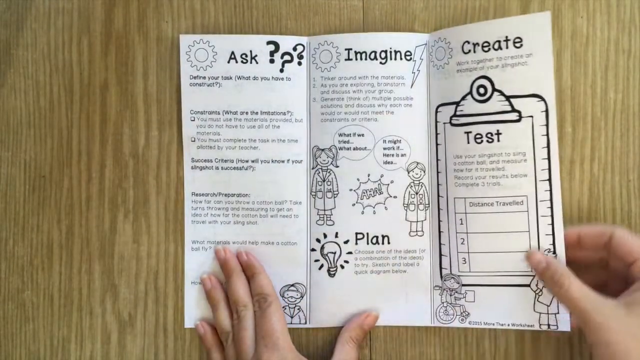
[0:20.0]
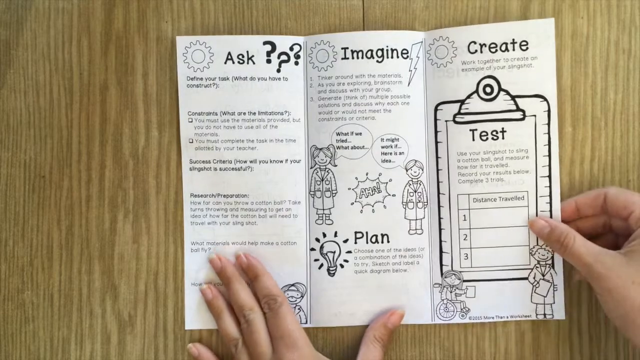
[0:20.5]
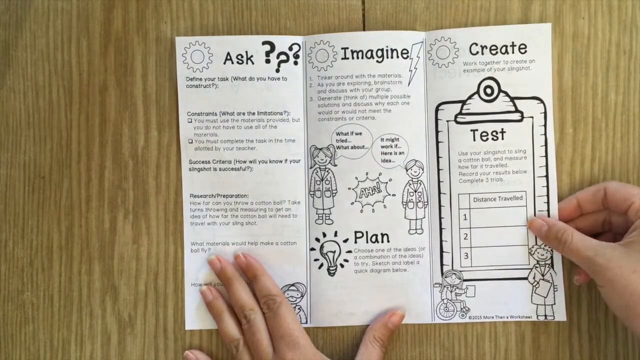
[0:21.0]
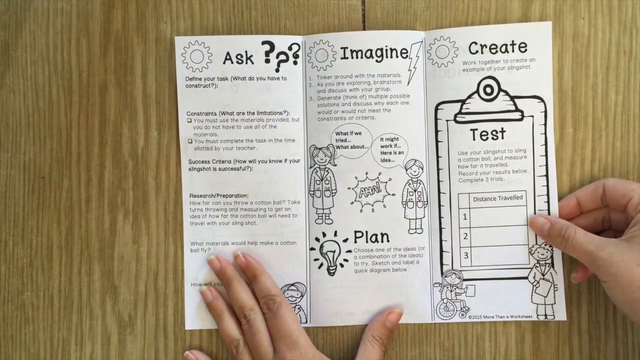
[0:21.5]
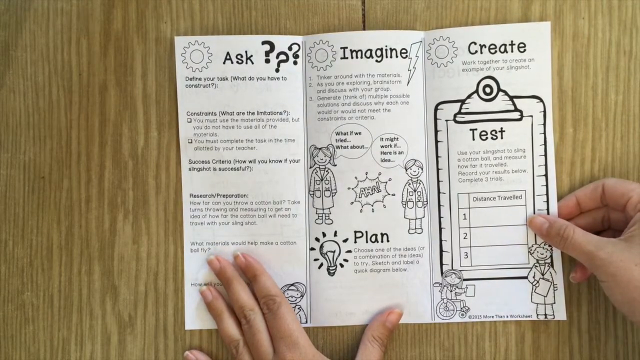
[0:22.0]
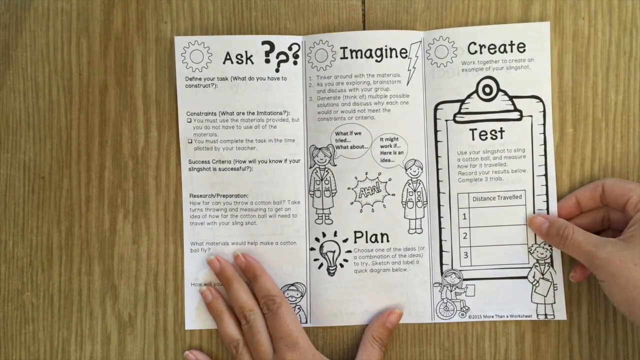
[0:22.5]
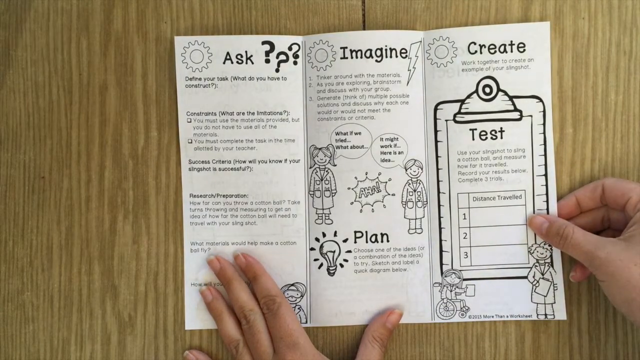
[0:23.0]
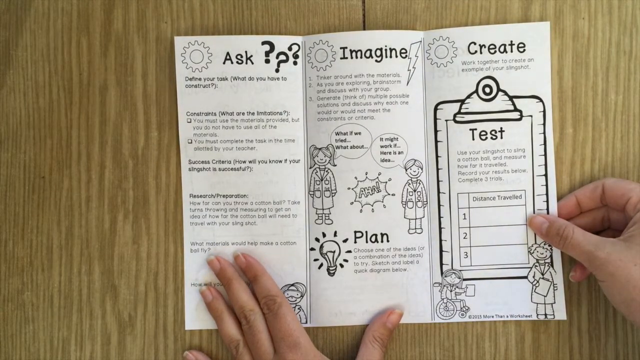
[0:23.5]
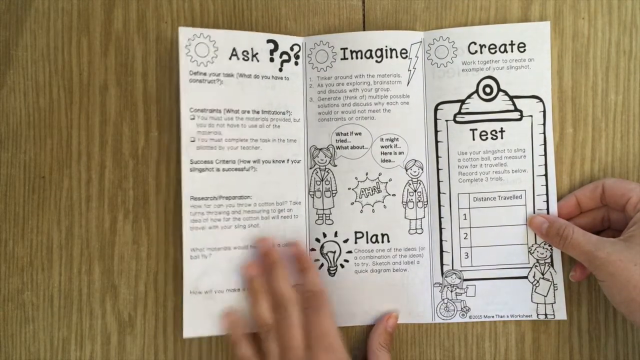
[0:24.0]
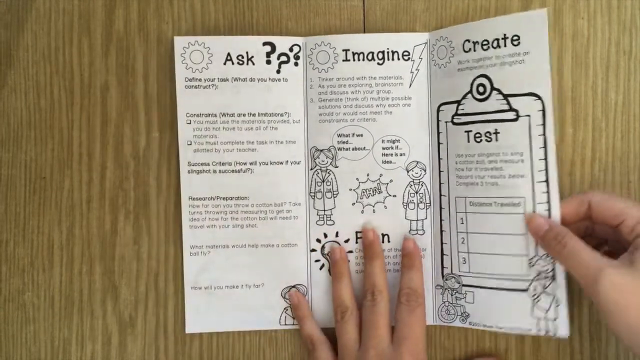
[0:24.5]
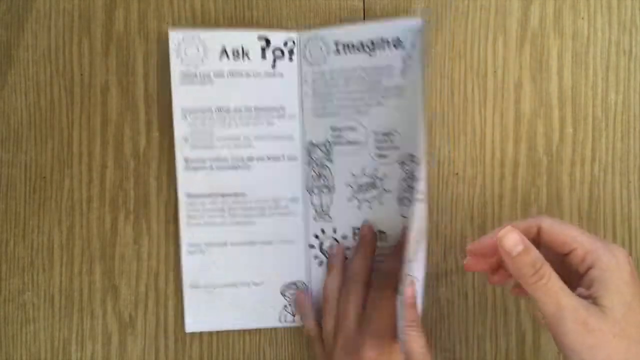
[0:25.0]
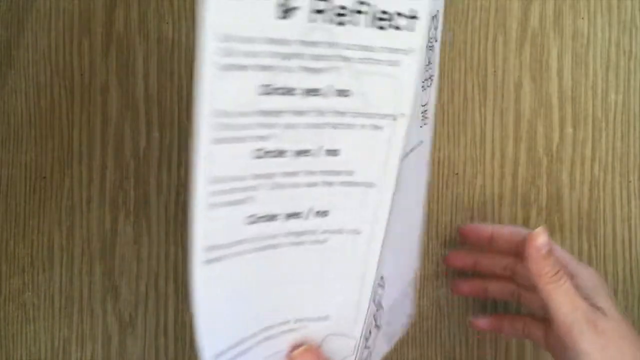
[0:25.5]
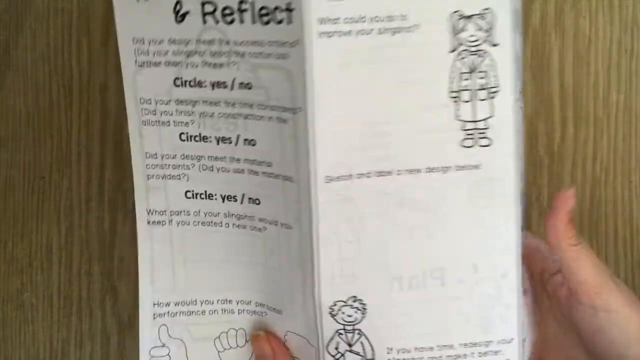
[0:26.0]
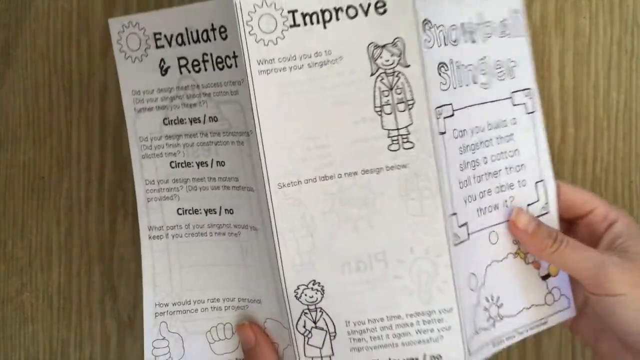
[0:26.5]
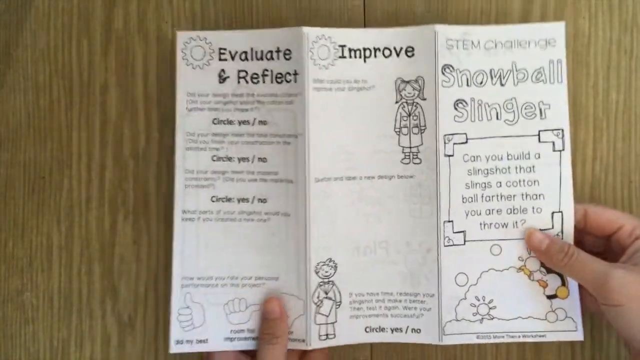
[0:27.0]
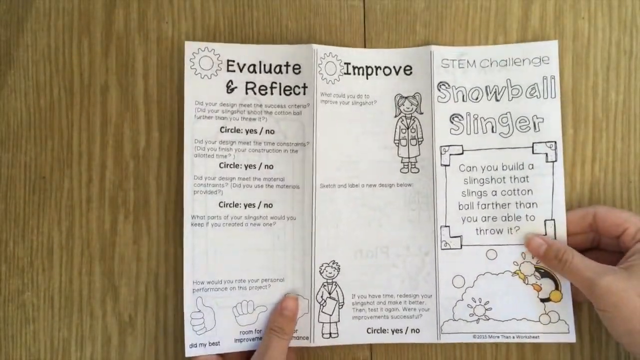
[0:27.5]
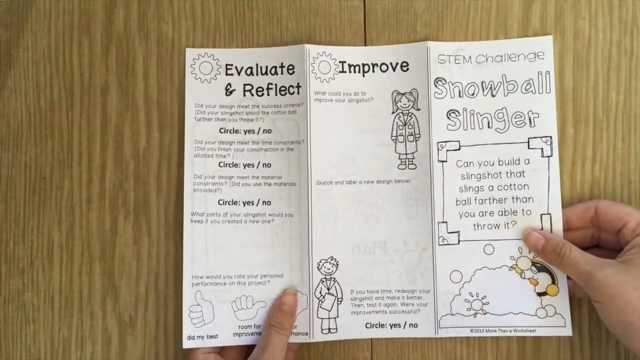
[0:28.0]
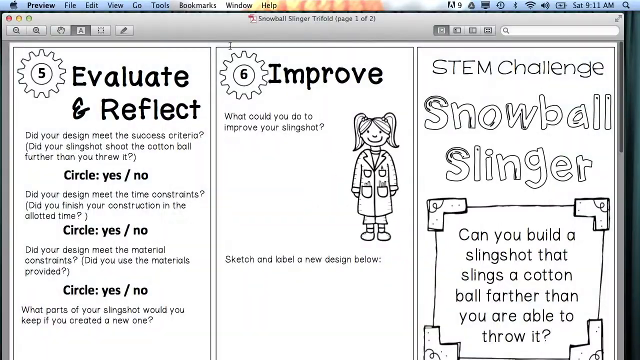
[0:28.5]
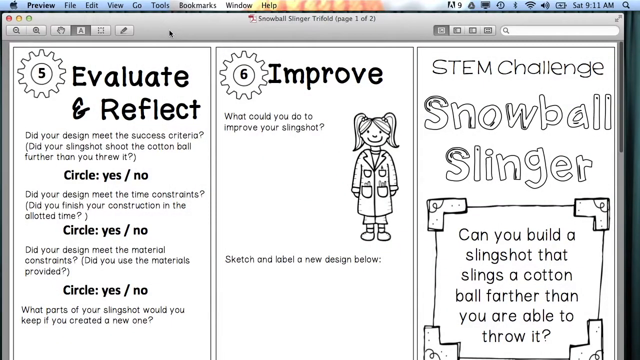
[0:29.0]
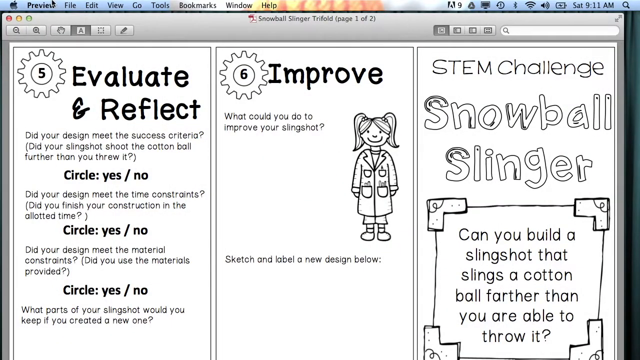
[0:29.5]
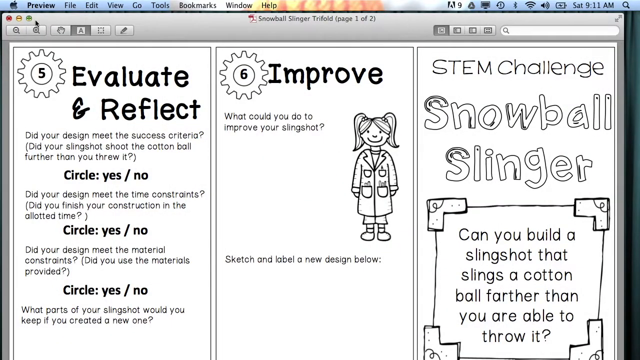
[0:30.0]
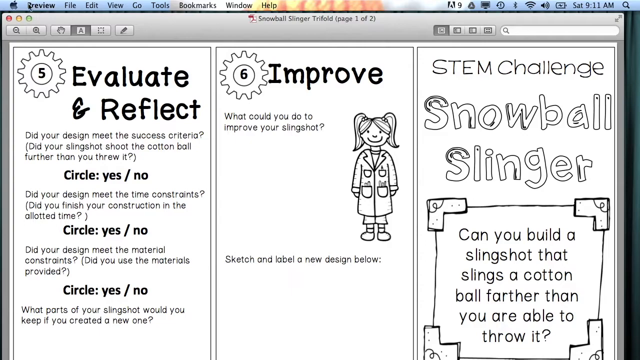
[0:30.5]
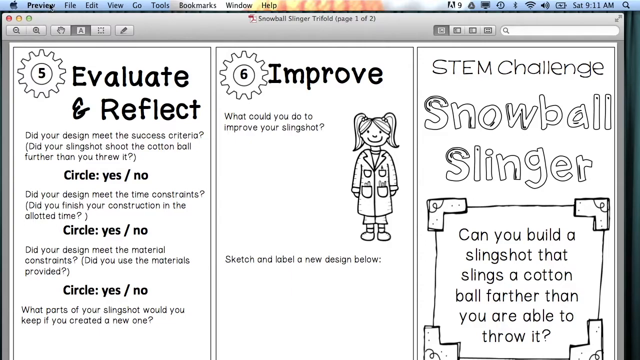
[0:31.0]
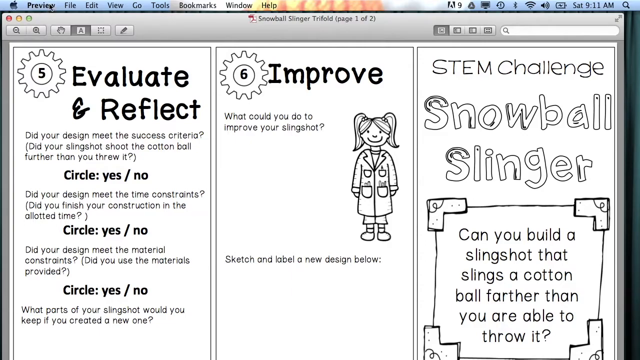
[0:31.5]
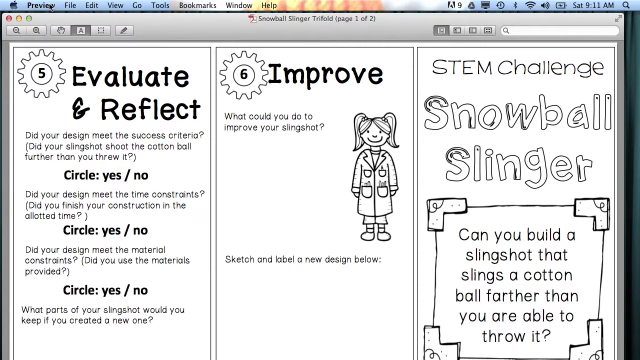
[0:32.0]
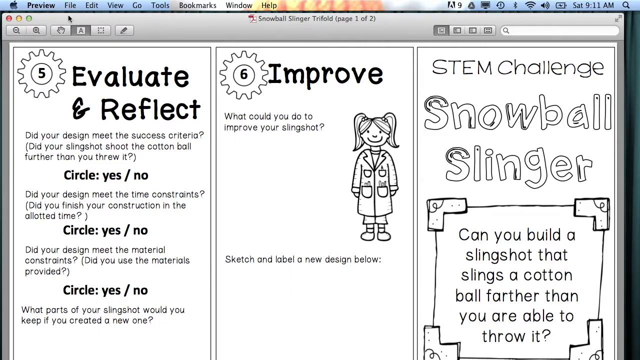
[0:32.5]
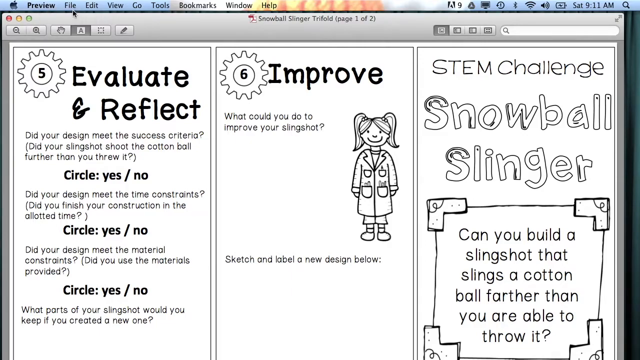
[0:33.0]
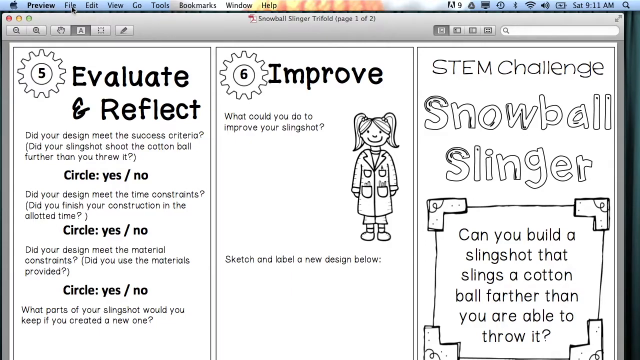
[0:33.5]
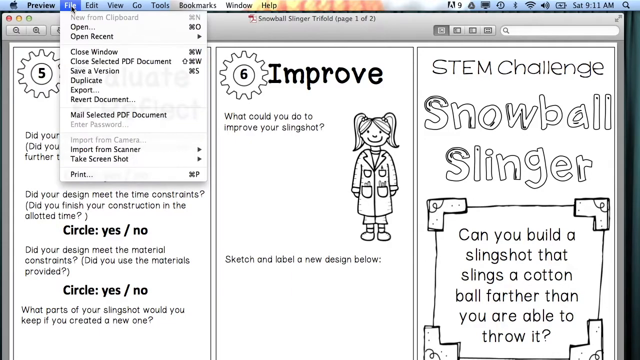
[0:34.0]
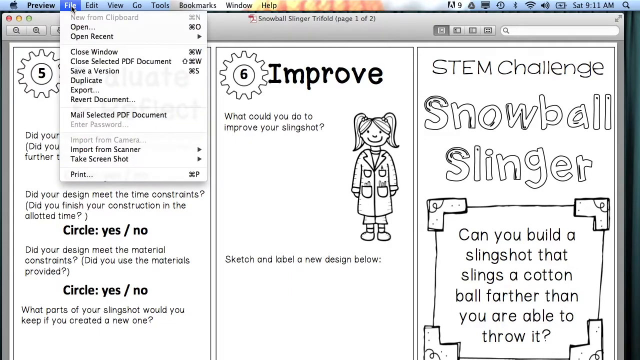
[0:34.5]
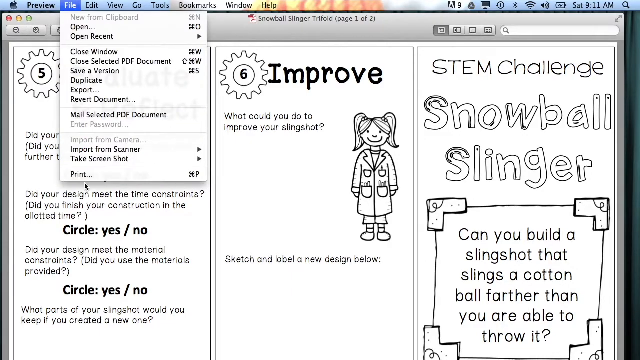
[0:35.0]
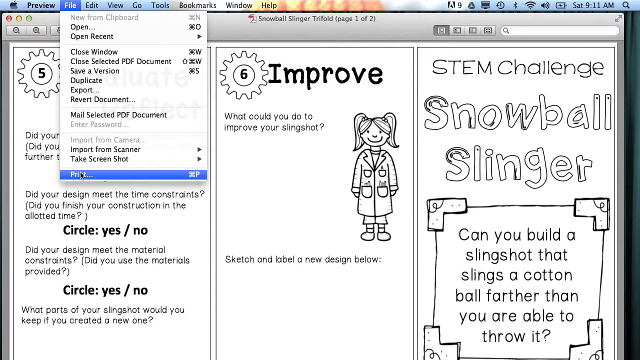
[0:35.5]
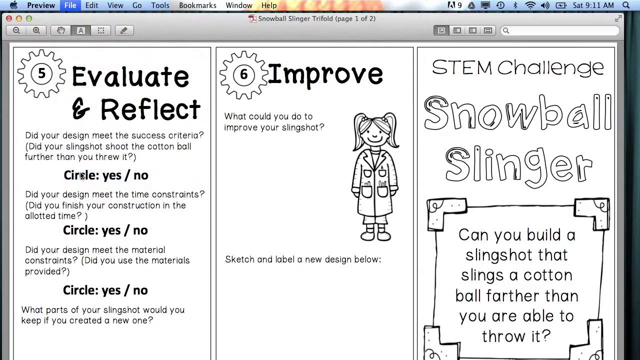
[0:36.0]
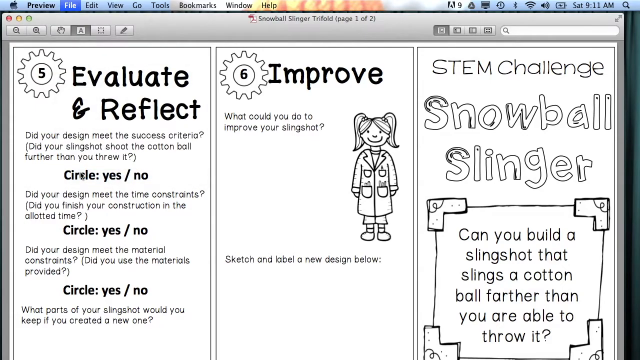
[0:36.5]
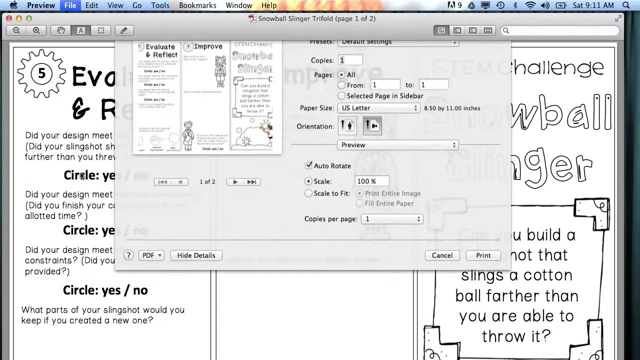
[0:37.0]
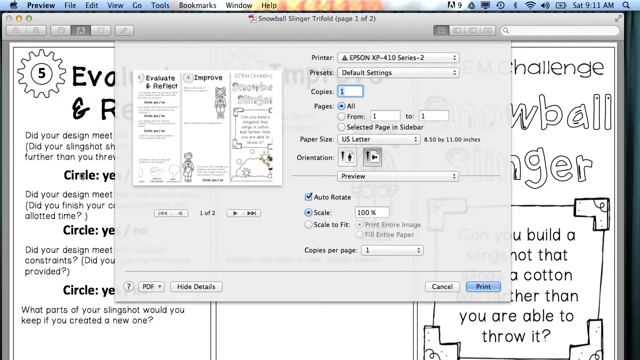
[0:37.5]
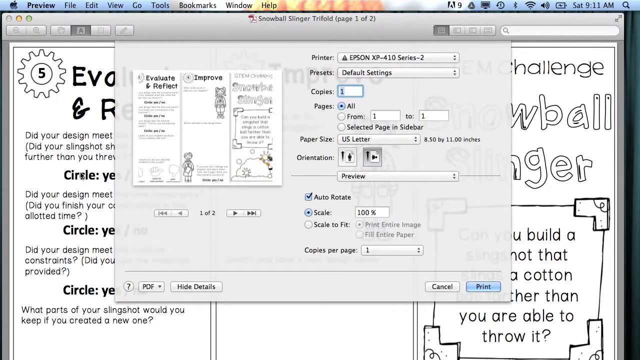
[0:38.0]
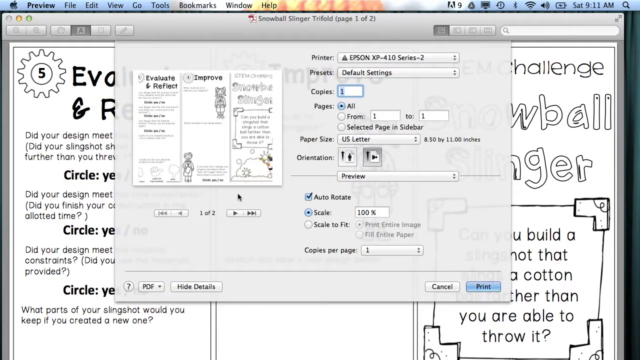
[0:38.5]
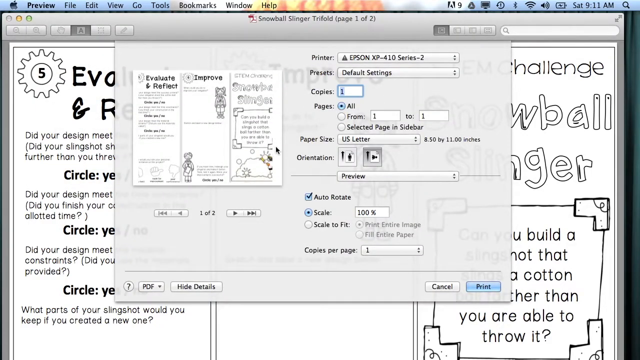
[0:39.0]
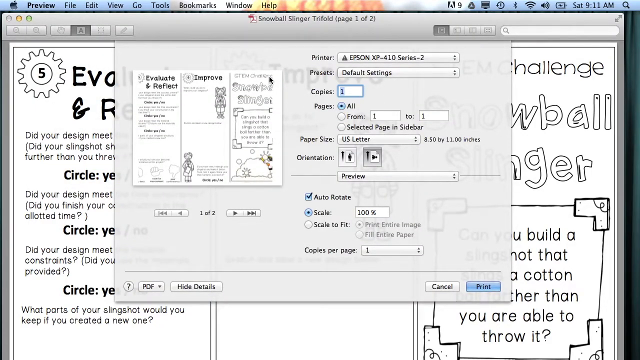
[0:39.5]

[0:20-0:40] The same paper is shown. Its first page says "ask and define your task" and "what do you have to construct?", with two tables to fill in for "success criteria" and "research preparation." An "imagine" section reads "what if we tried" and "what about it might work," followed by creating a plan and a "create" section containing a test with "distance travelled" and many figures of people. The girl then brings the paper up on the computer, where everything is much clearer. She goes to File, then Print, and is about to print one page, with one copy selected. The printer is an Epson with default settings, the scale is 100%, and two pages are shown.